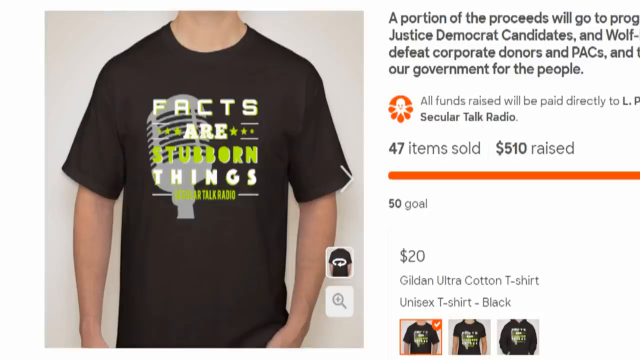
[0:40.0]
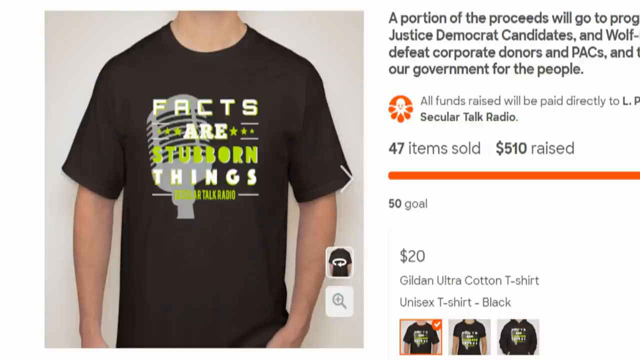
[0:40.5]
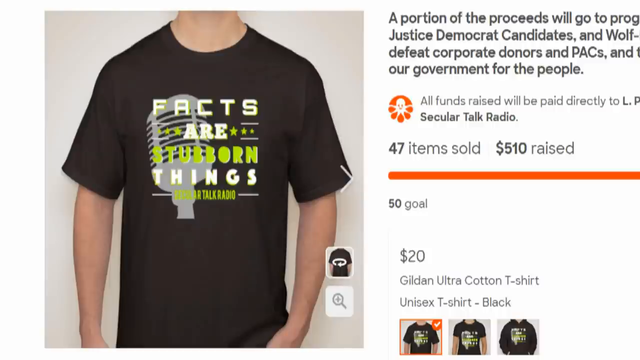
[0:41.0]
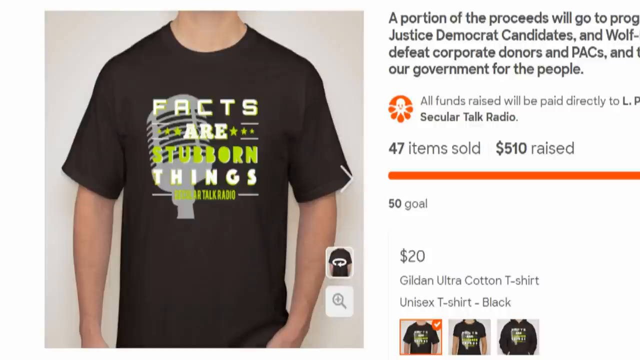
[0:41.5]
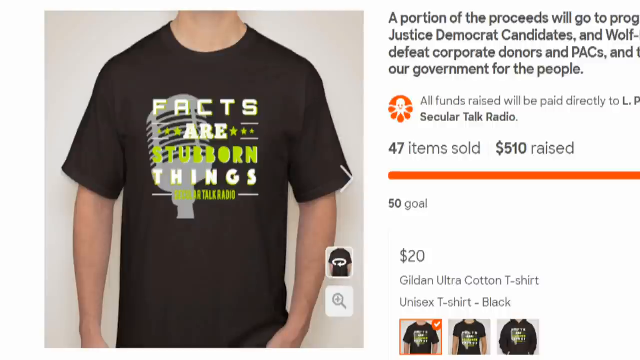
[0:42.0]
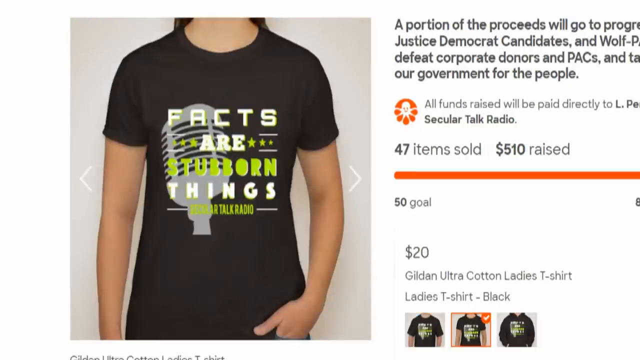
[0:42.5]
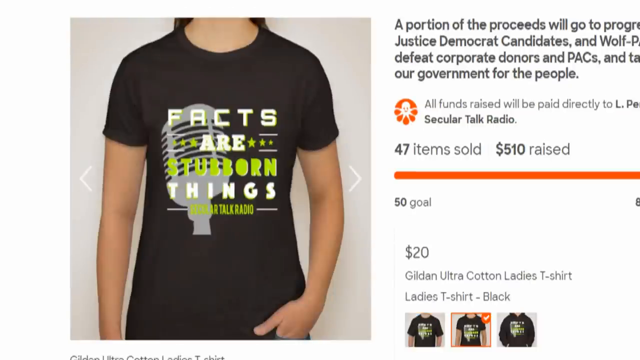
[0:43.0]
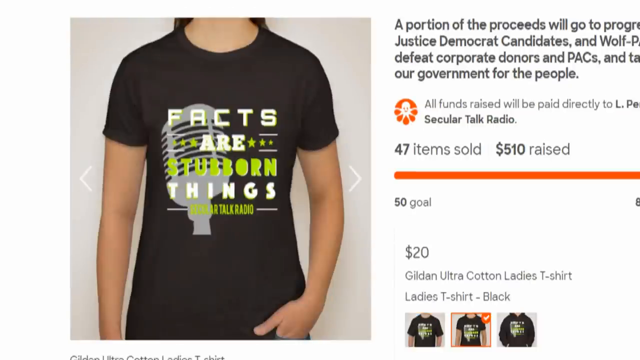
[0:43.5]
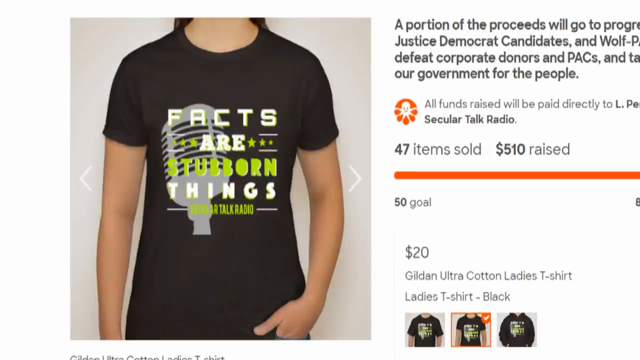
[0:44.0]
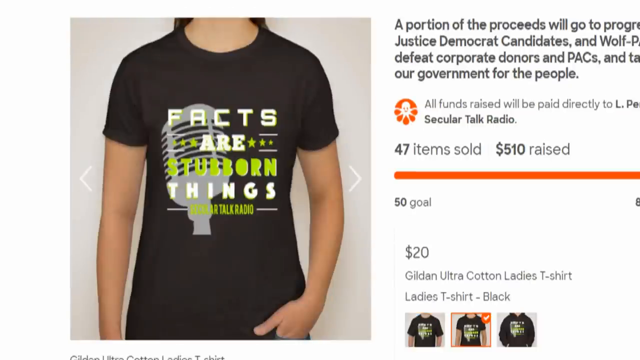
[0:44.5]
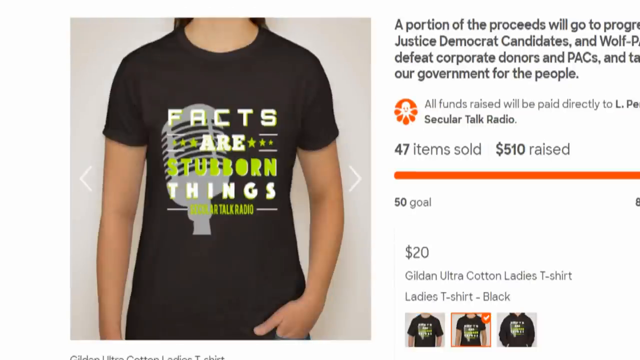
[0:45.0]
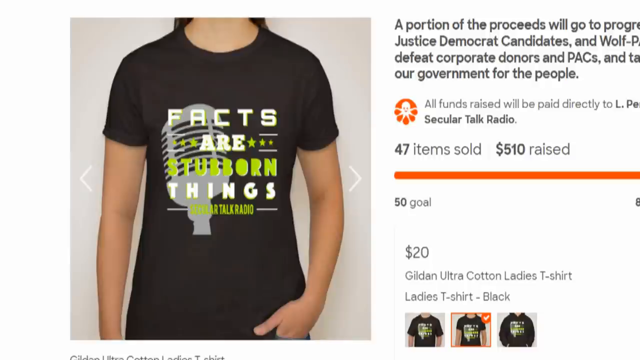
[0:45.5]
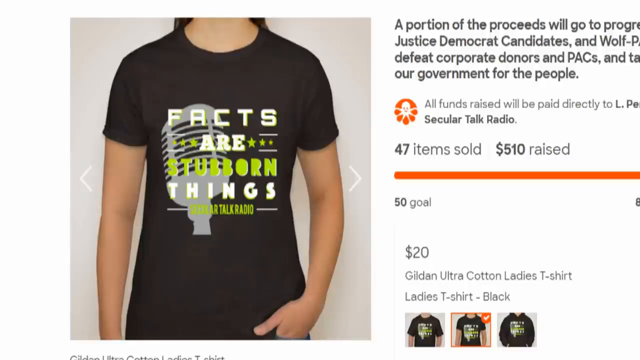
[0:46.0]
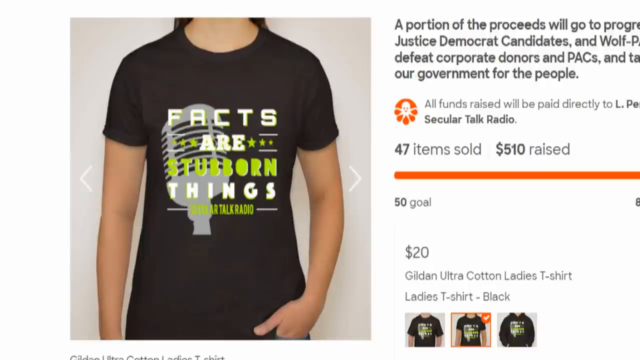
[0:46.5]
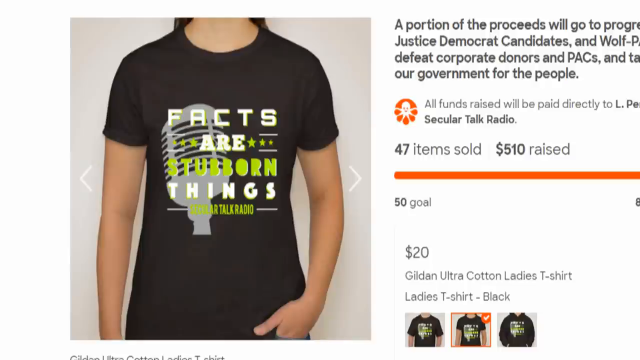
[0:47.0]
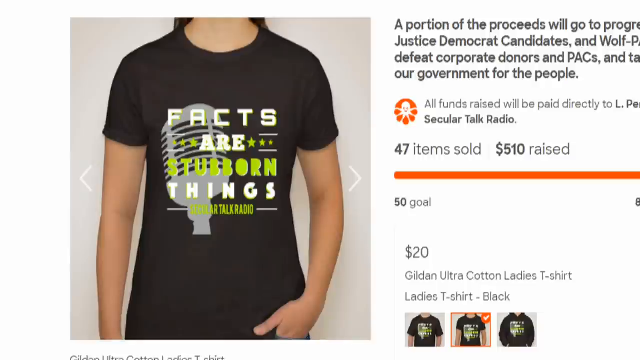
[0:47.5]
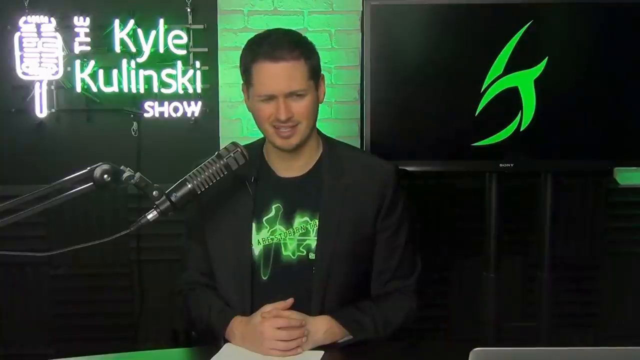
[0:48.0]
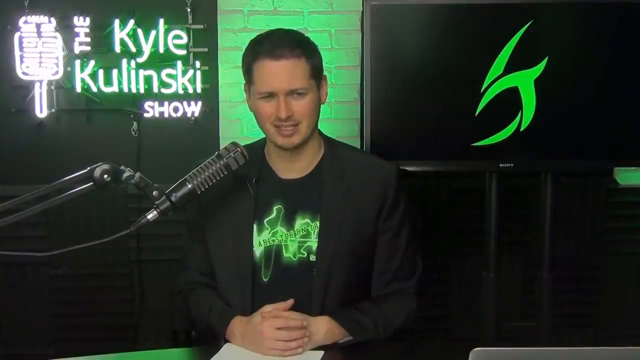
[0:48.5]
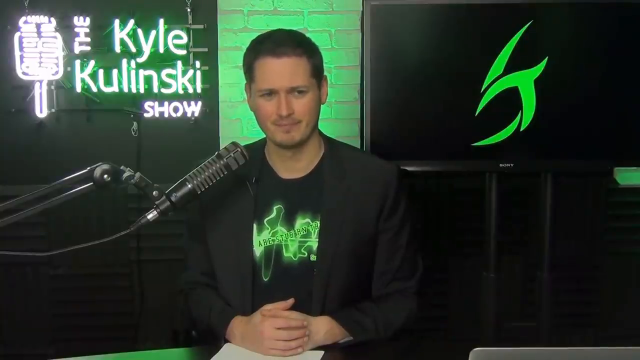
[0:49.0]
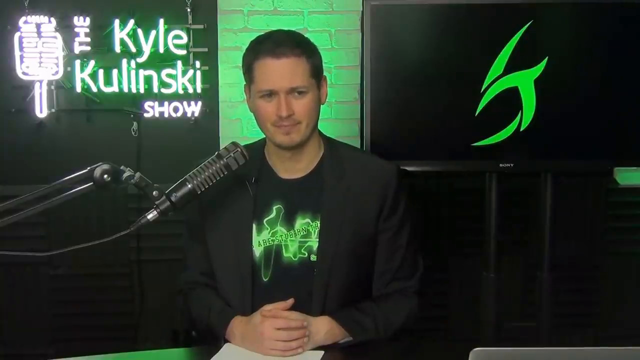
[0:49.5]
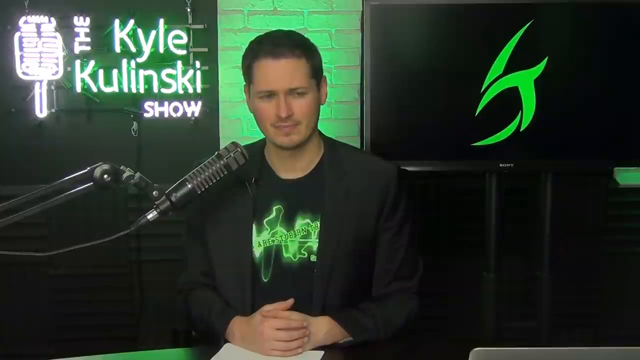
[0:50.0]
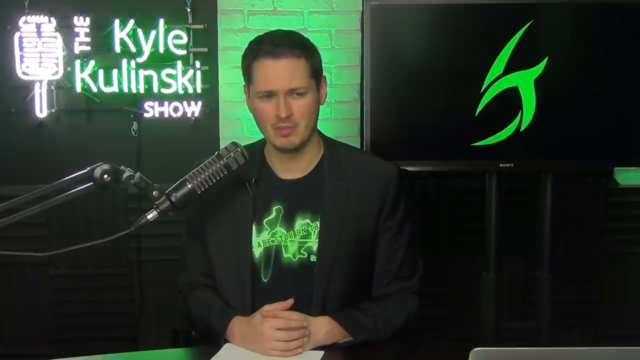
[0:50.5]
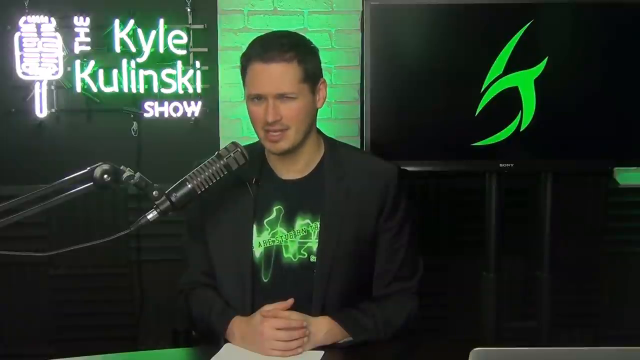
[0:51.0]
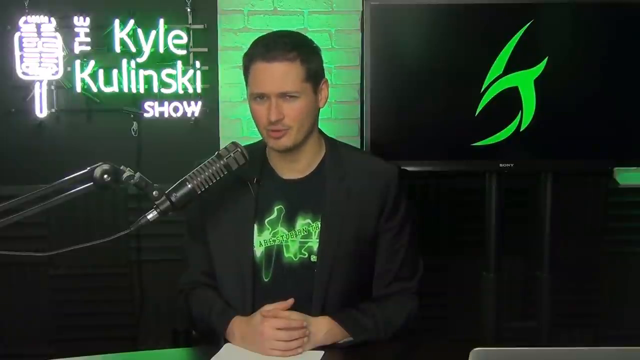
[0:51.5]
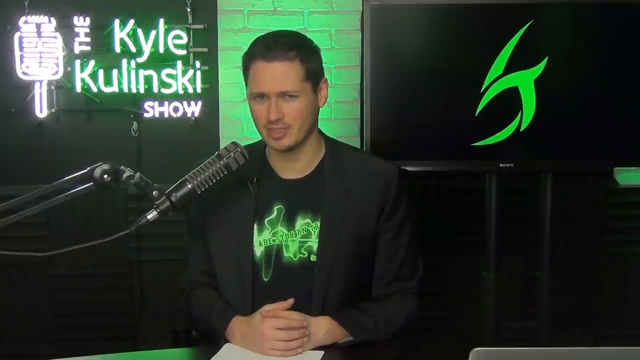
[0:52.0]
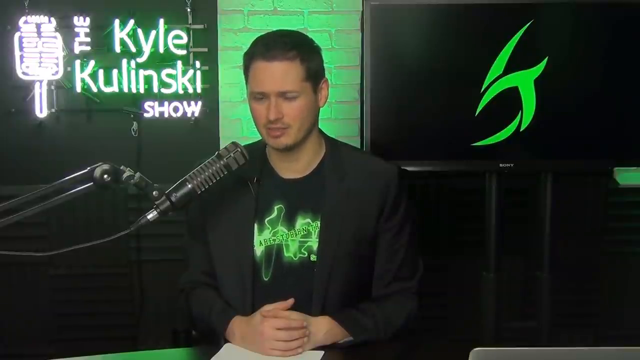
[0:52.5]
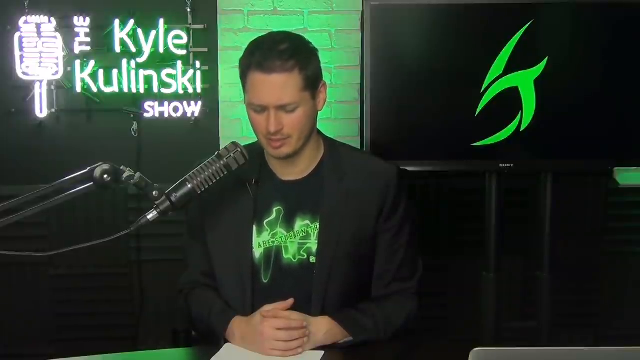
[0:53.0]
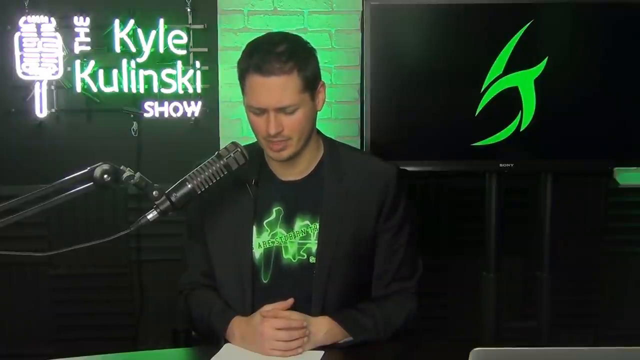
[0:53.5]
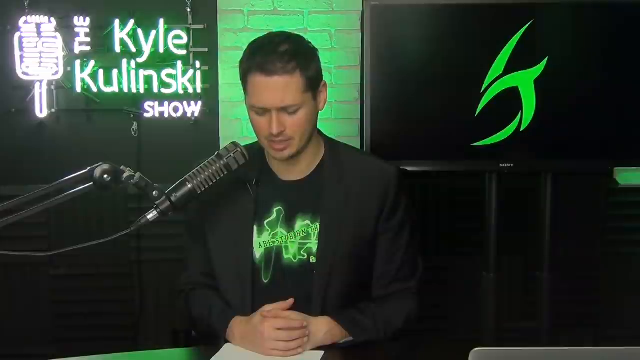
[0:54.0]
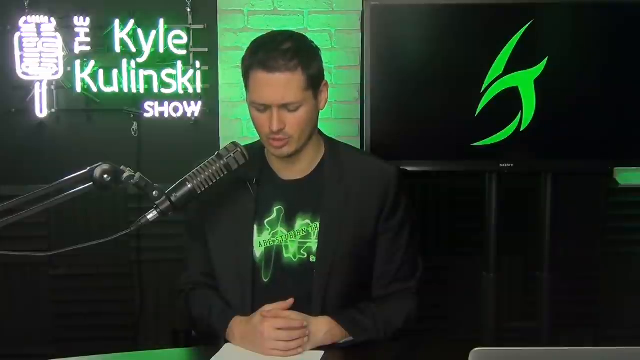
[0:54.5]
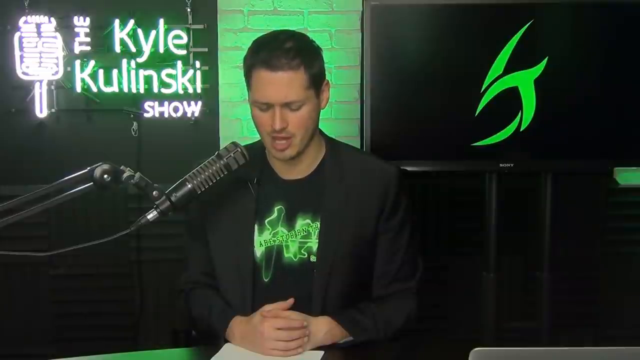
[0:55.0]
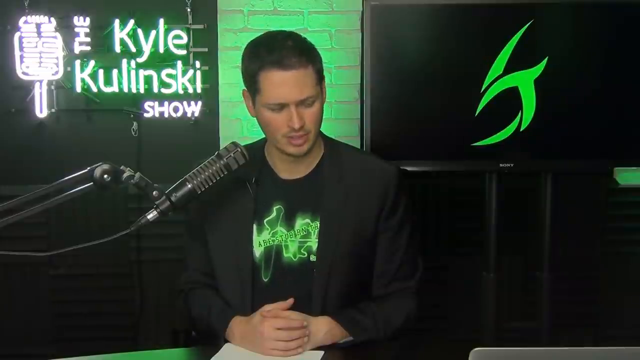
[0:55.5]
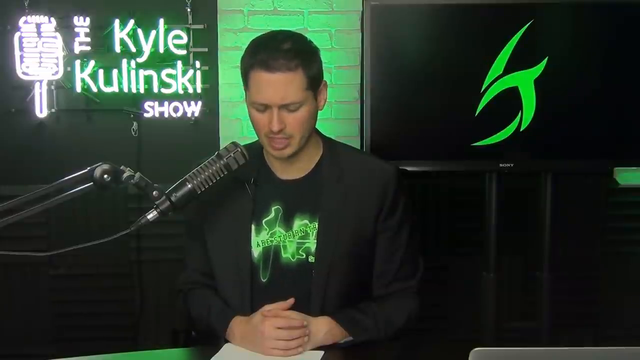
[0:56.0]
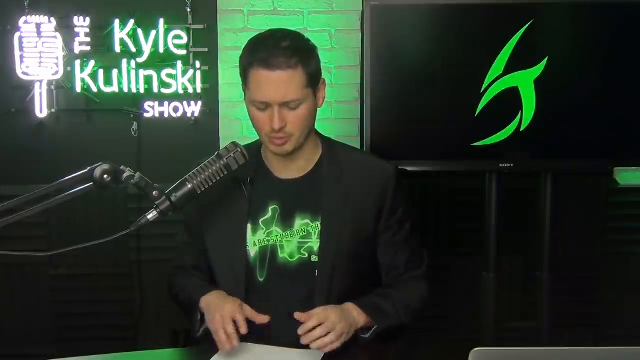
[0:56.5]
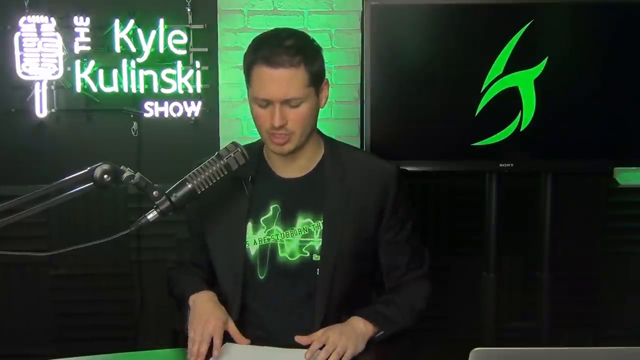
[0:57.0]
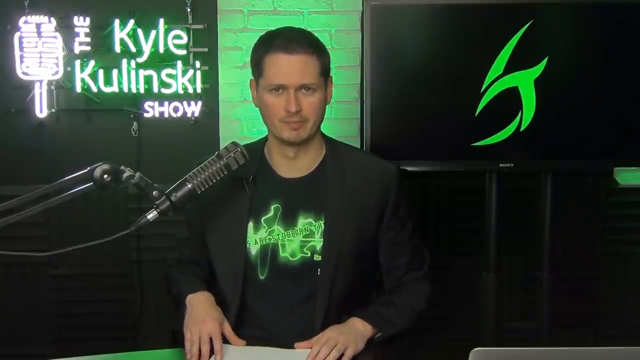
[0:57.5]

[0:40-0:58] A dark green t-shirt from the Kyle Kulinski show is displayed, reading "facts are stubborn things" with "secular talk radio" at the bottom. A picture of a microphone is prominently displayed on the left. "Facts" is white, with three stars on each side of the R; "stubborn" is green, "things" is white, and "secular talk radio" is green. Text says that a portion of the proceeds will go to candidates and to defeating corporate donors and PACs, followed by "All funds will be paid directly to LP Secular Talk Radio." It also reads "47 items sold, $510 raised."